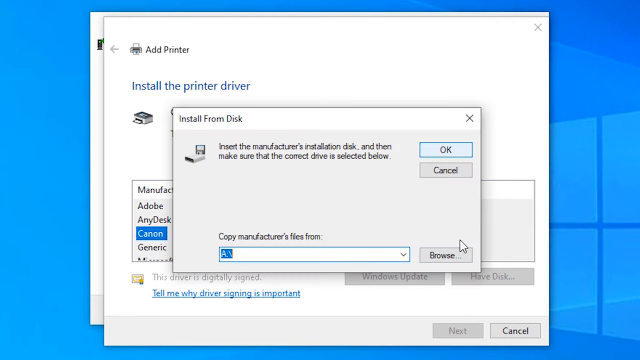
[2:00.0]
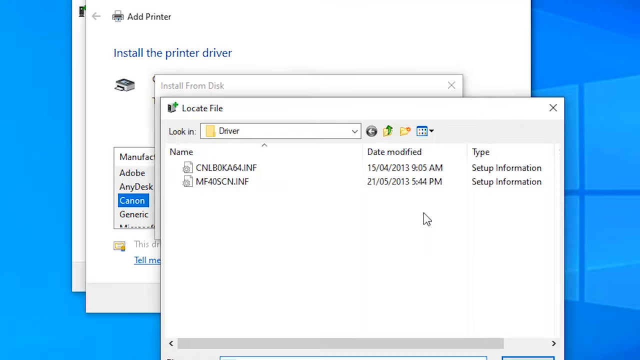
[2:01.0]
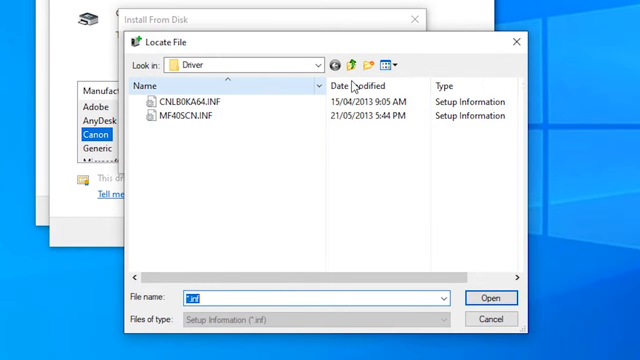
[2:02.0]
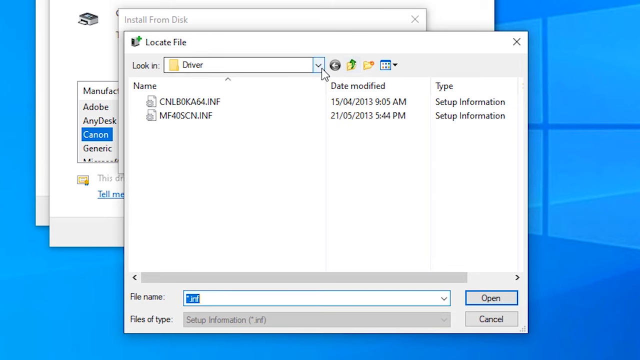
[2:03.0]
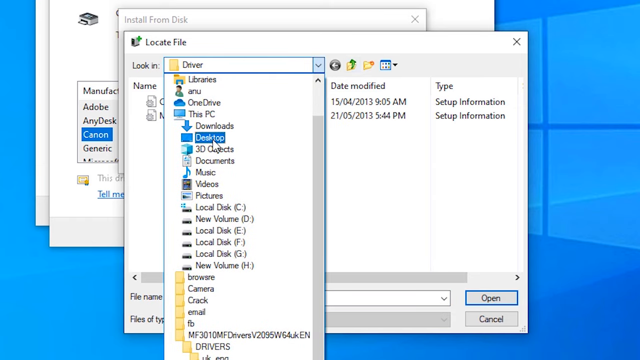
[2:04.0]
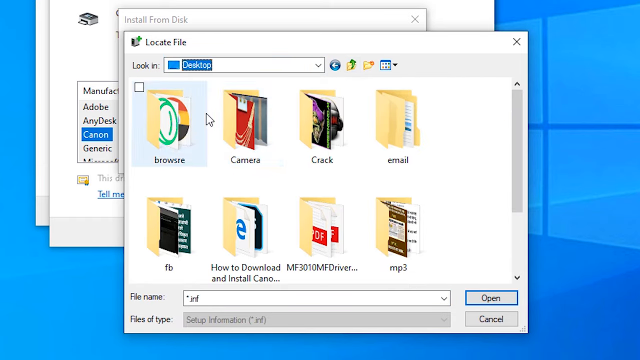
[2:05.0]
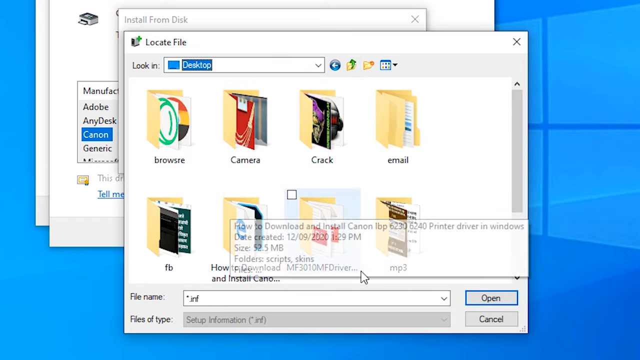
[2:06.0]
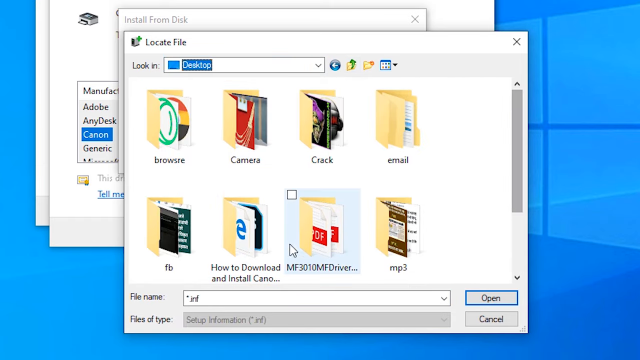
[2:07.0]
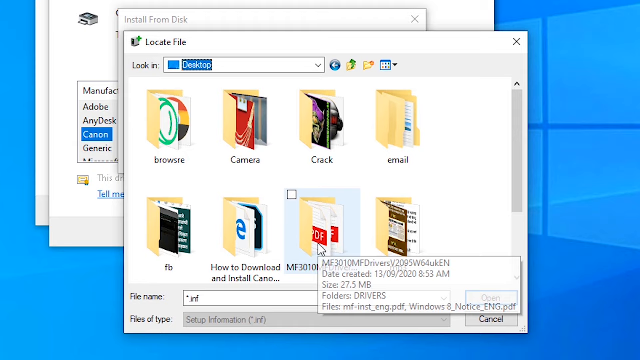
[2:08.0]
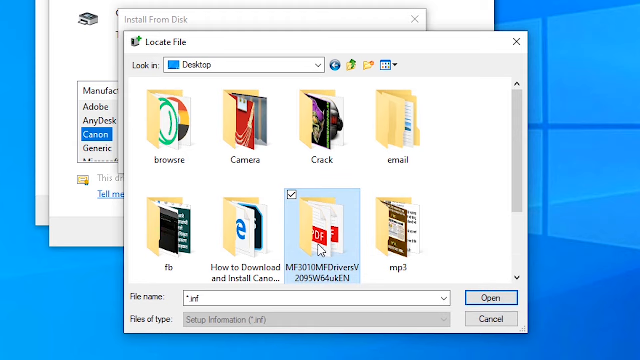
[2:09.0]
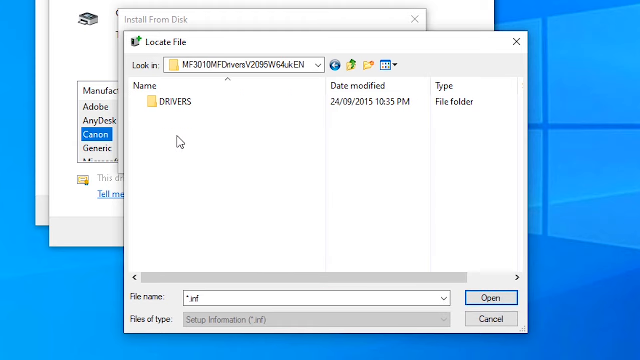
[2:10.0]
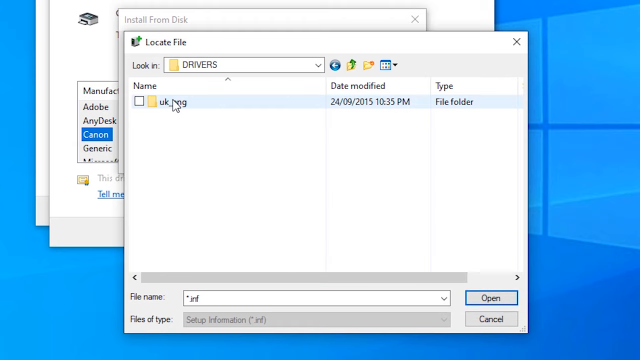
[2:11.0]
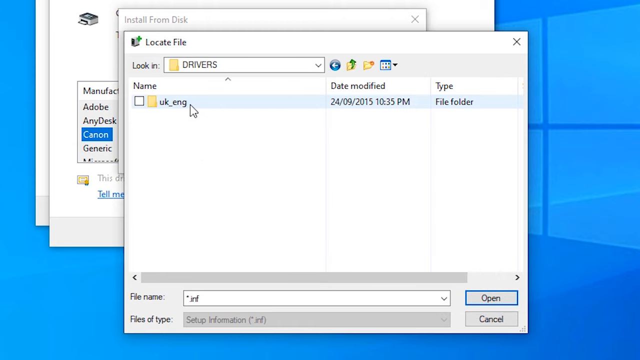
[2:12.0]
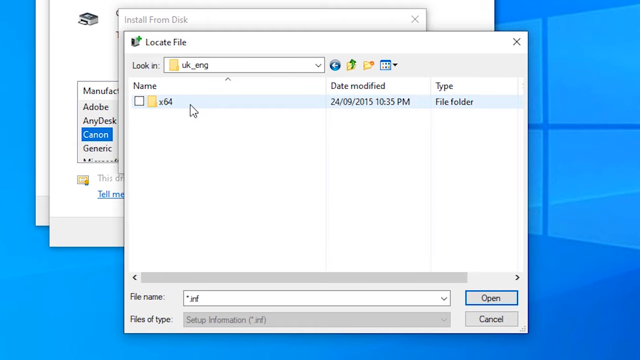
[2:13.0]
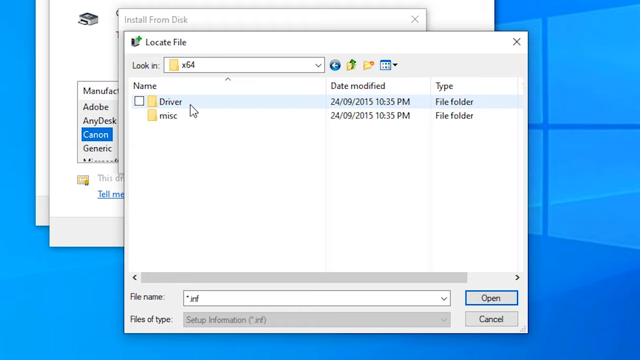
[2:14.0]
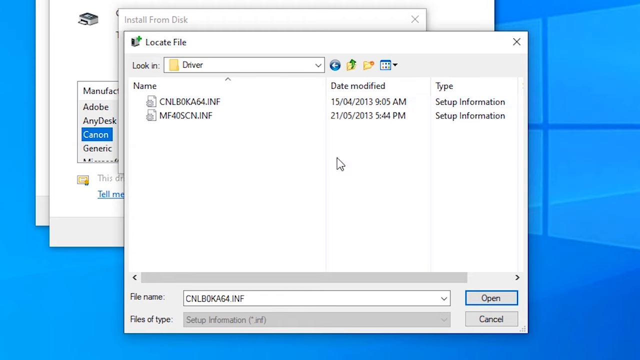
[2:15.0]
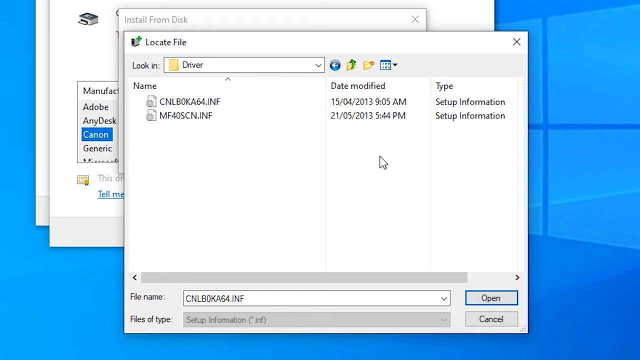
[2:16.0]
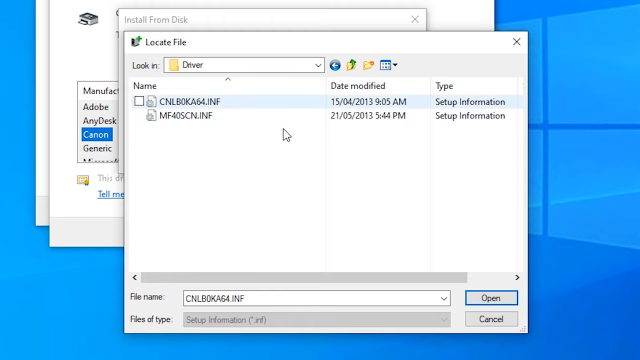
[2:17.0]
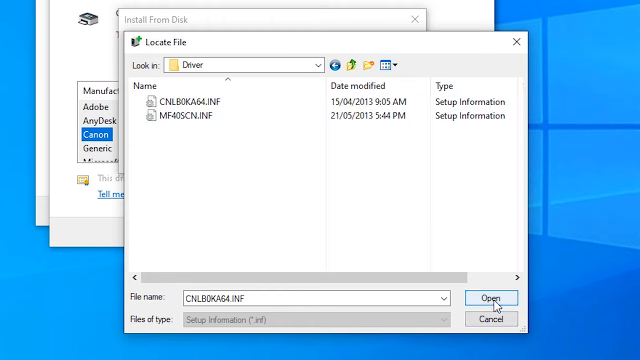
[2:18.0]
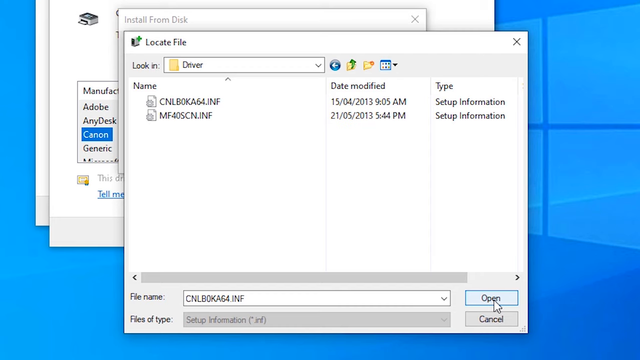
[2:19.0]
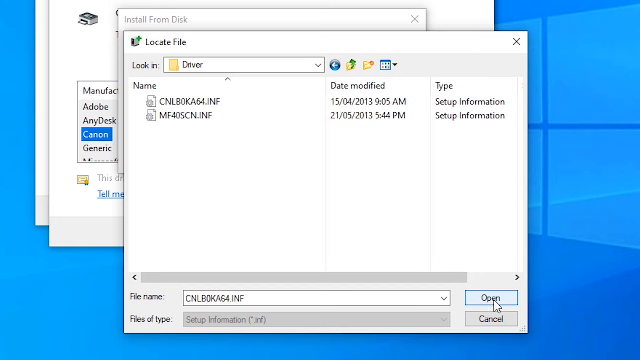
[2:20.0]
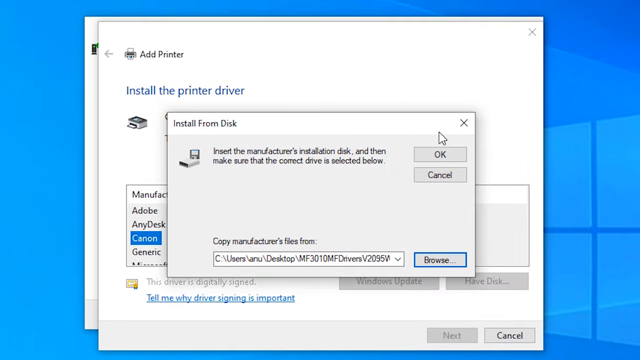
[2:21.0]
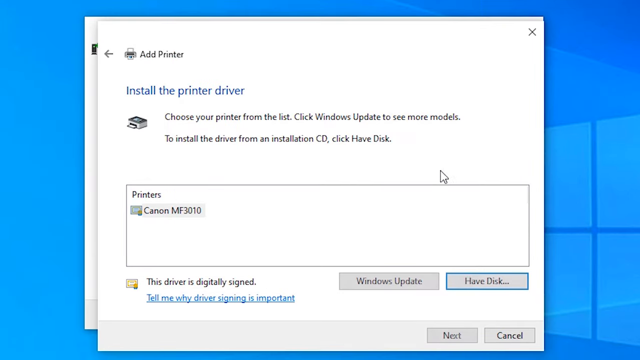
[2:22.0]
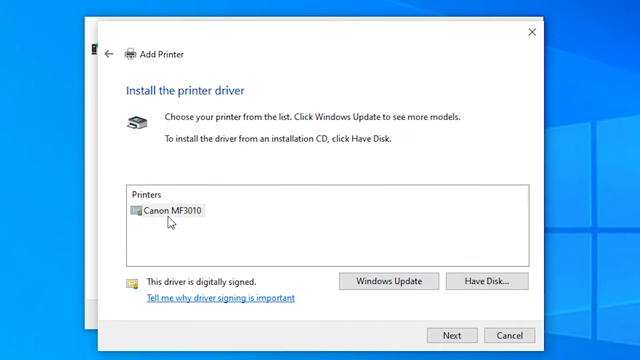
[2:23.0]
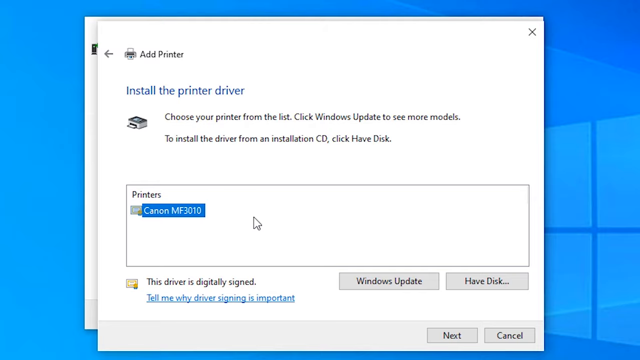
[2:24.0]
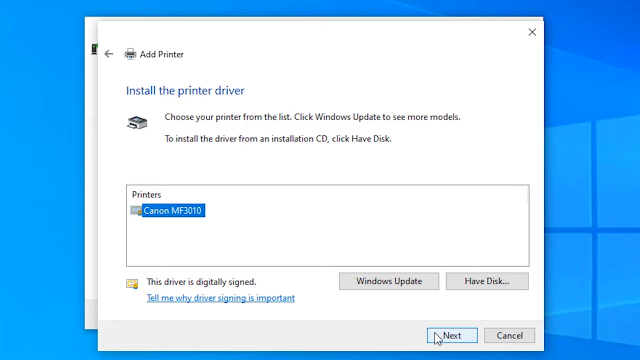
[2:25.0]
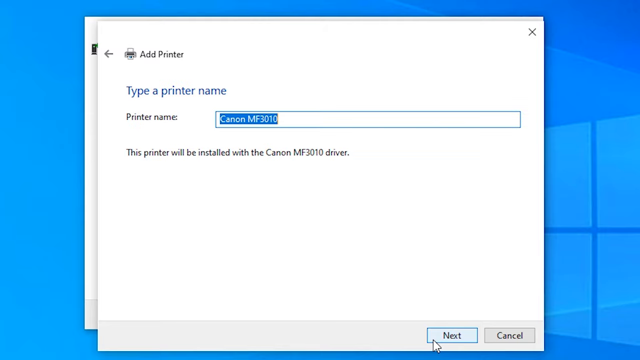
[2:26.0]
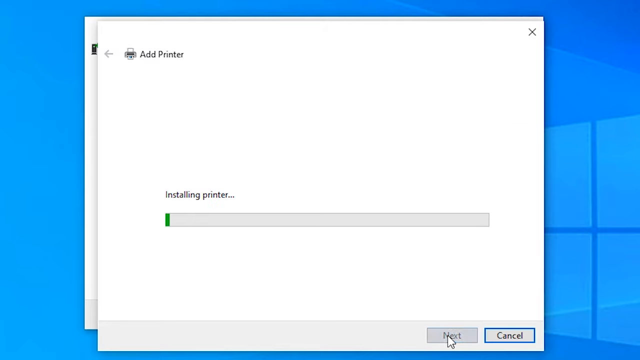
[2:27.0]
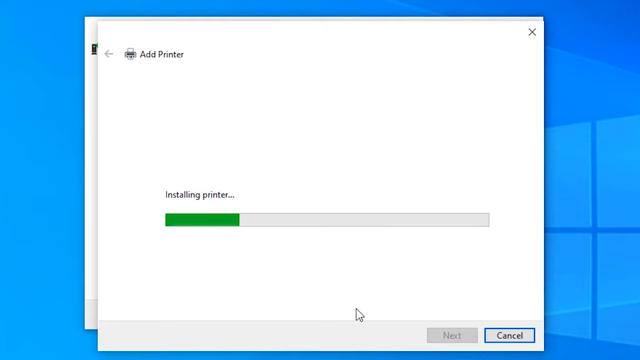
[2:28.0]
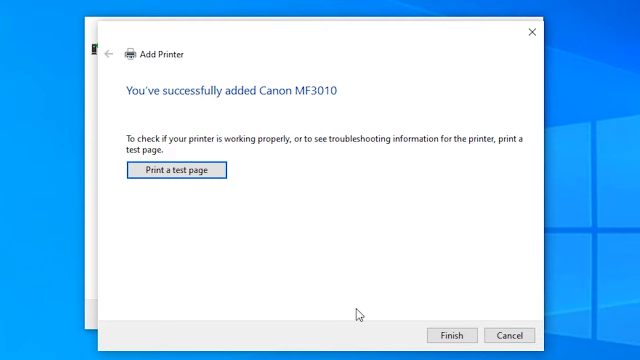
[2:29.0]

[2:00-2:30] A window pops up, and the user's cursor clicks on an option, after which another window pops out, leaving a cascade of open windows. The window has a whole bunch of options, and the user hovers over a drop-down menu and clicks on it, bringing up a bunch of folders with different options. They click one, and another window pops up showing folders that are kind of pried open a little, with documents inside them that are all like logos. They hover over one and click on one that has what look like PDFs in it. Another window appears with an option like a check mark, which they click, and it keeps navigating into a deeper folder. They click open on one of the selected options, and another window opens that says "install from disk"; they click the OK button. A window that says "add printer" then appears, and they highlight text that says "canon mf 3010". They click the next button, and it starts to download.